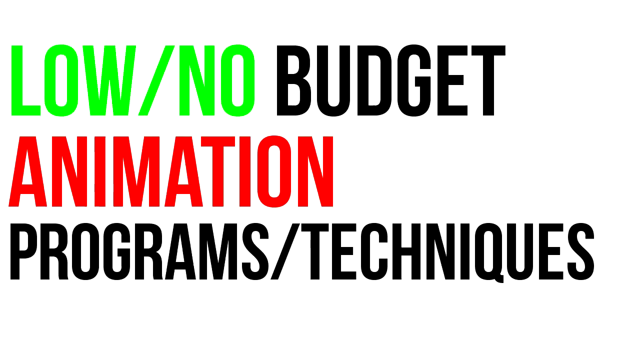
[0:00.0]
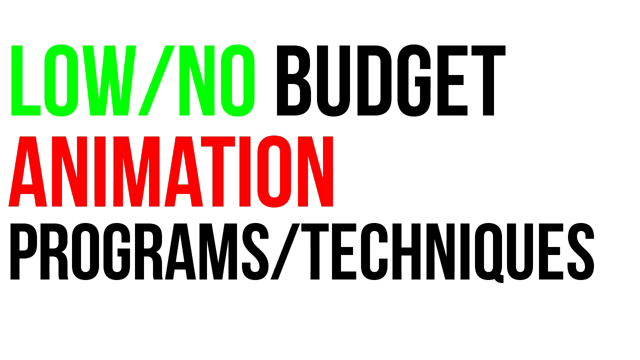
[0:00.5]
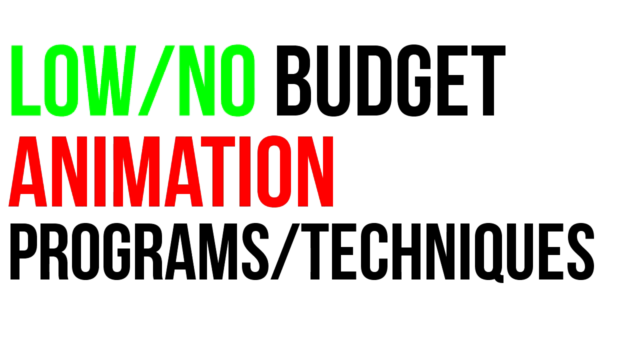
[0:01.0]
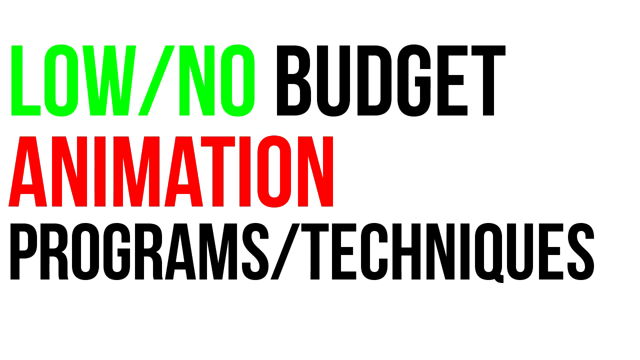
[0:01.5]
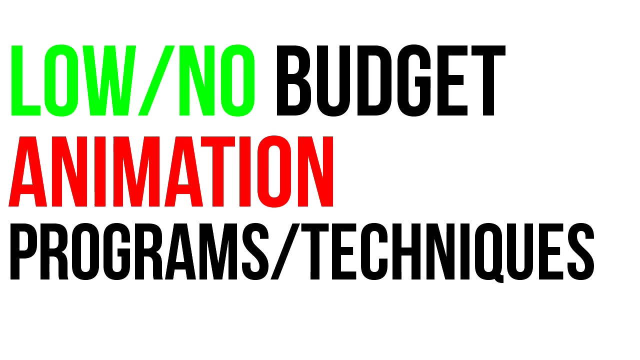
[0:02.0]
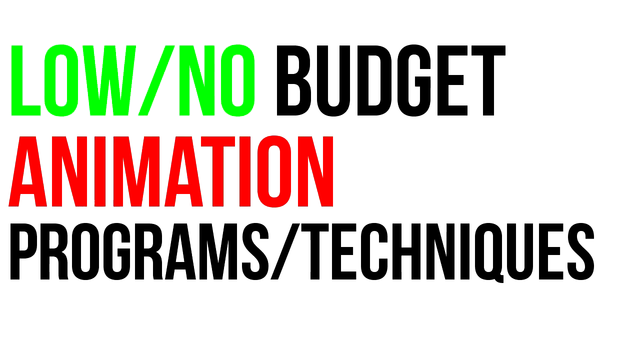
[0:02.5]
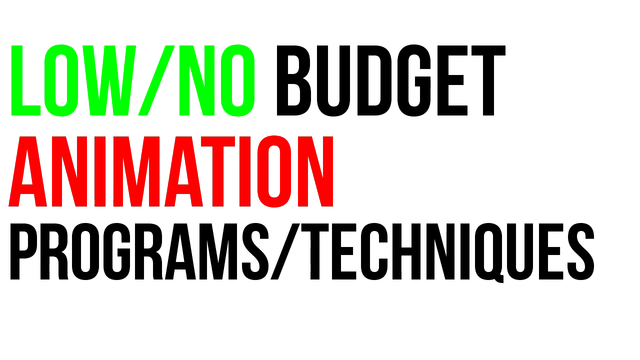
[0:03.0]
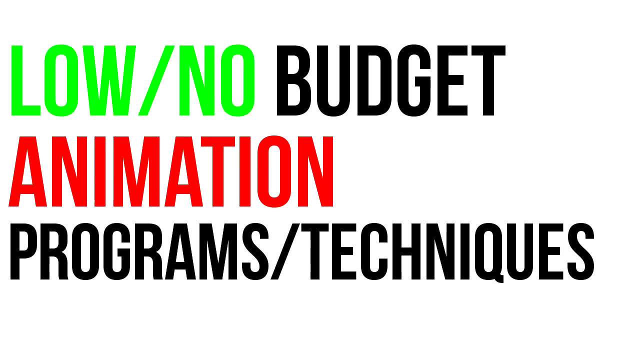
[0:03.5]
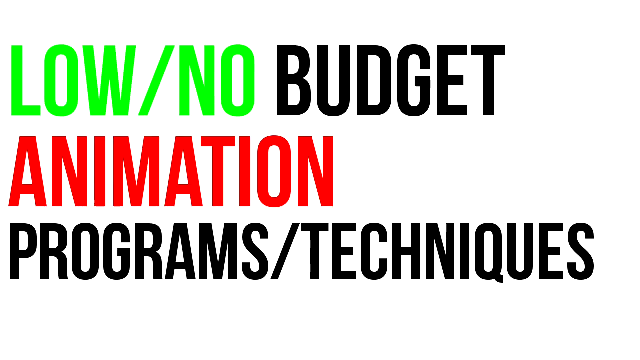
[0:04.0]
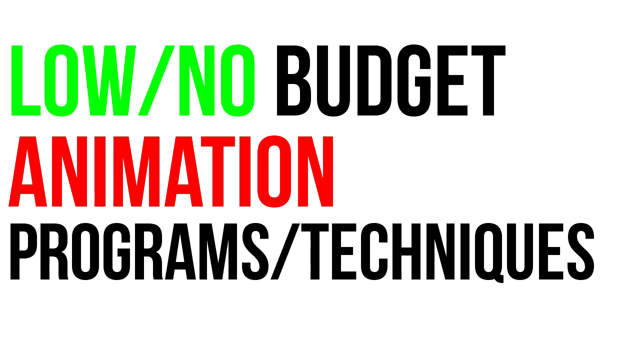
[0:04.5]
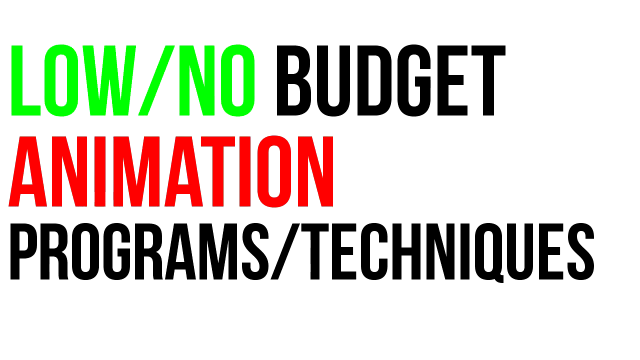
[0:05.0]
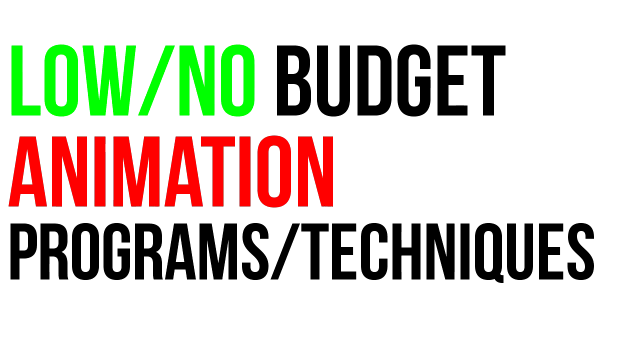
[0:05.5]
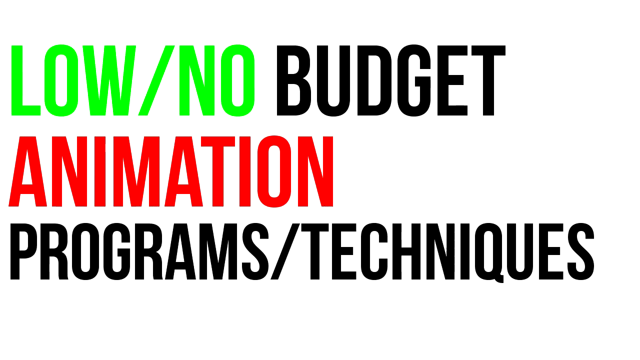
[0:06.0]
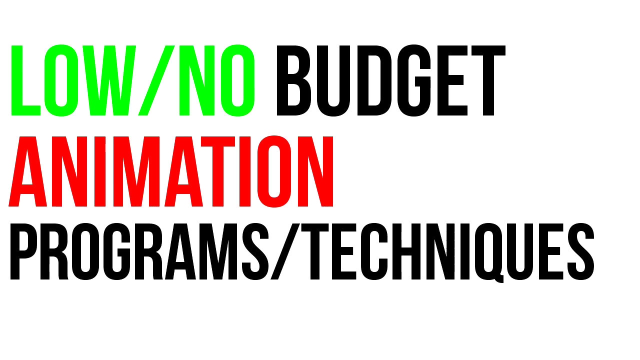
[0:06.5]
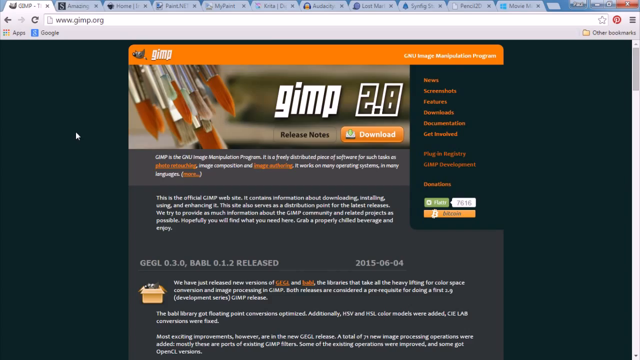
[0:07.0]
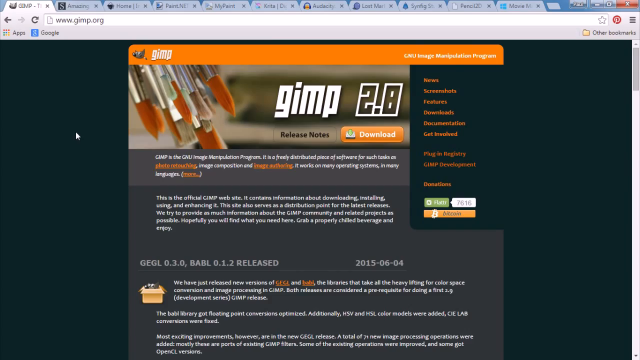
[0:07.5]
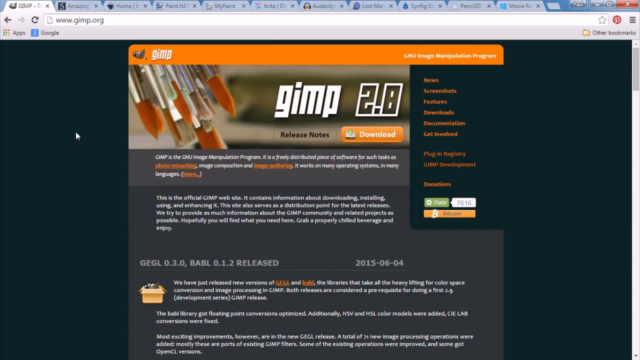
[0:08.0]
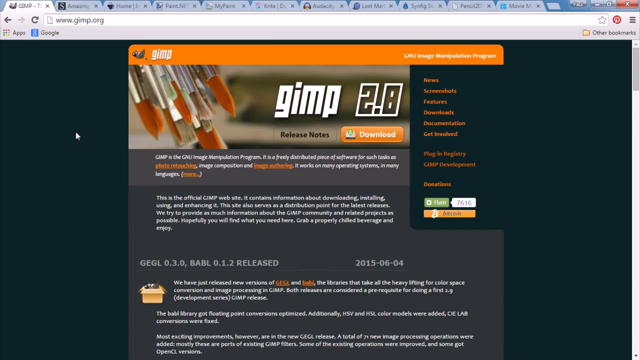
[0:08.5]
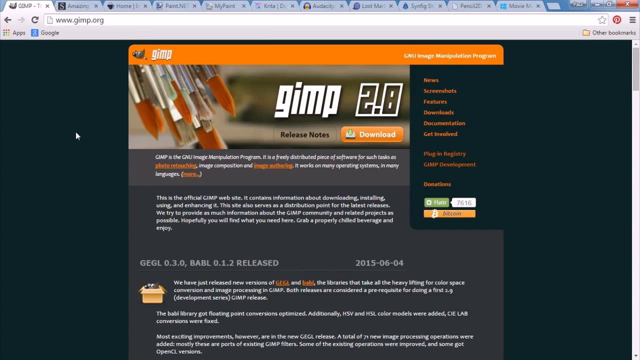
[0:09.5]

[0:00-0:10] A title appears on a simple white background: in the upper left corner "low" is written in green, followed by "budget" in black. Beneath that, "animation" is in red, and beneath that, in black, "programs/techniques." The video then cuts to what looks like a website with many tabs open. The first tab is active, showing "www.gimp.org." On the right side, "GIMP" is written in white, with "release notes" in black below it. There is also an orange rectangular download button reading "download" in white.